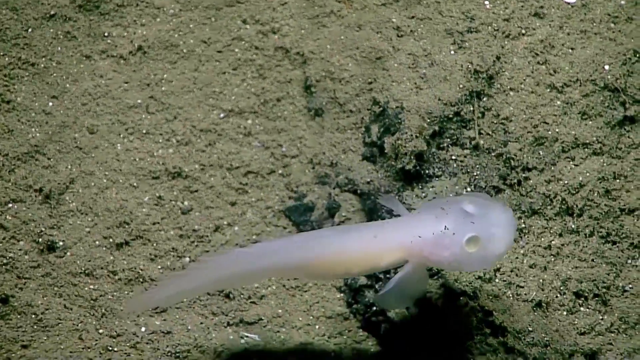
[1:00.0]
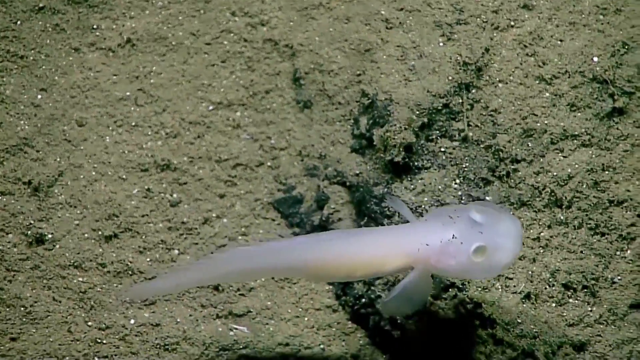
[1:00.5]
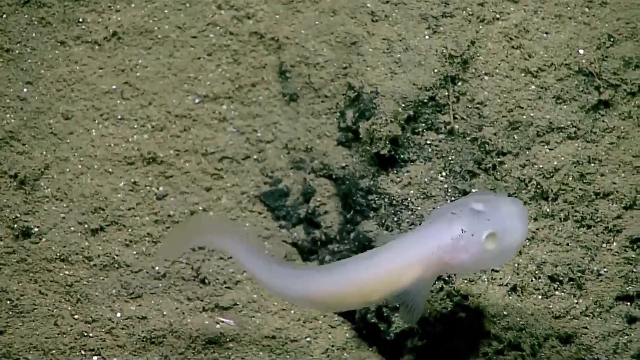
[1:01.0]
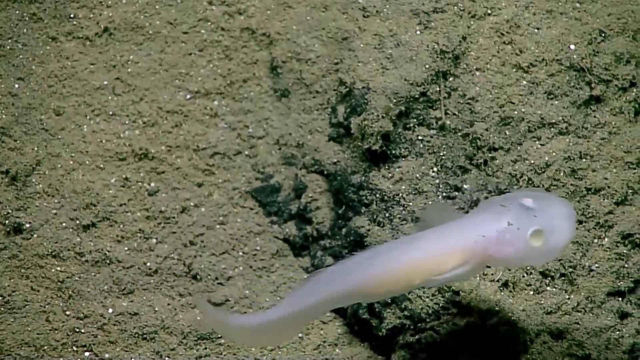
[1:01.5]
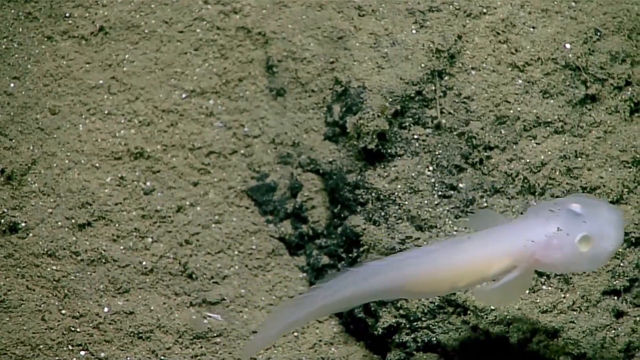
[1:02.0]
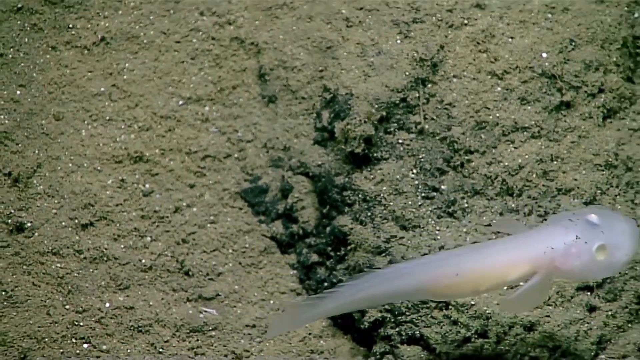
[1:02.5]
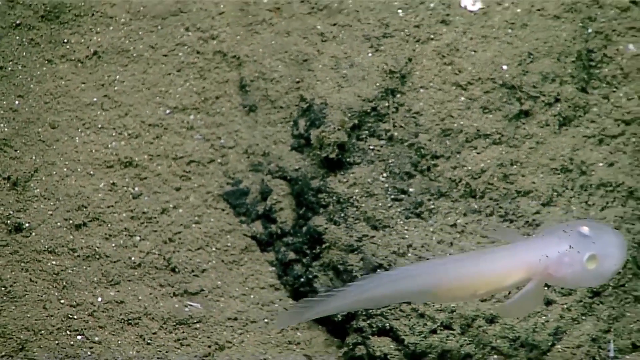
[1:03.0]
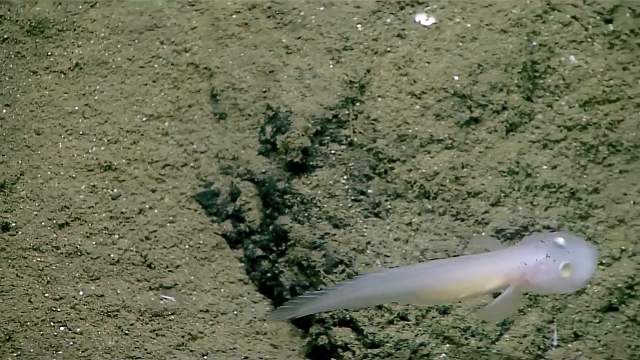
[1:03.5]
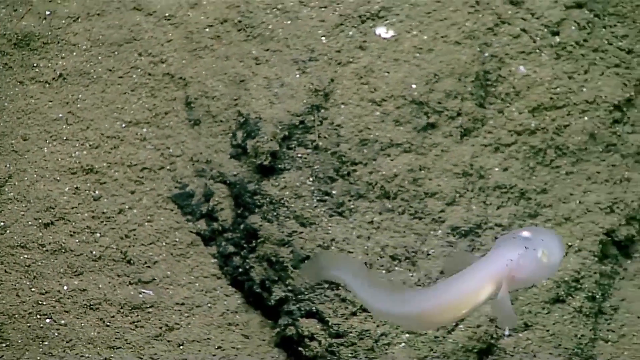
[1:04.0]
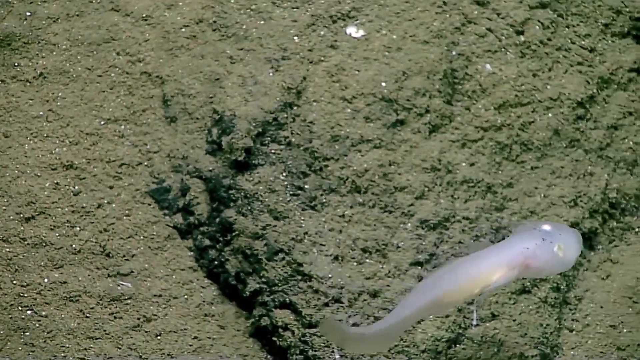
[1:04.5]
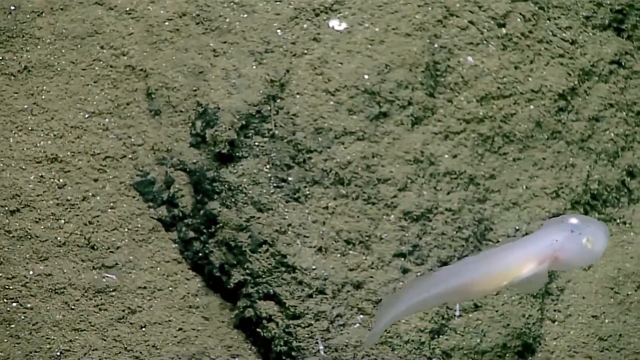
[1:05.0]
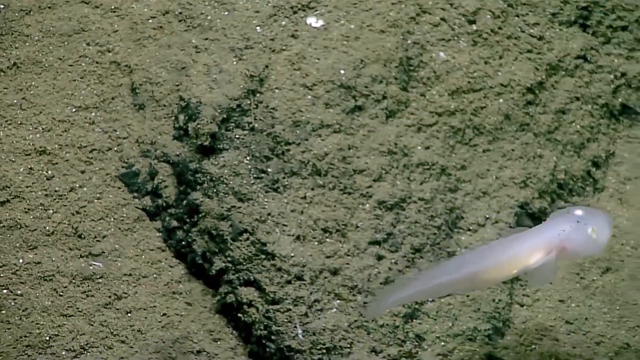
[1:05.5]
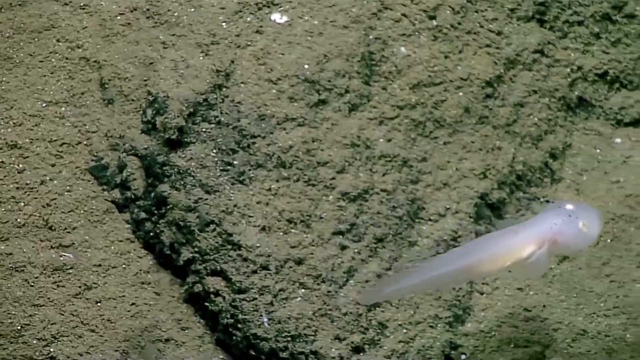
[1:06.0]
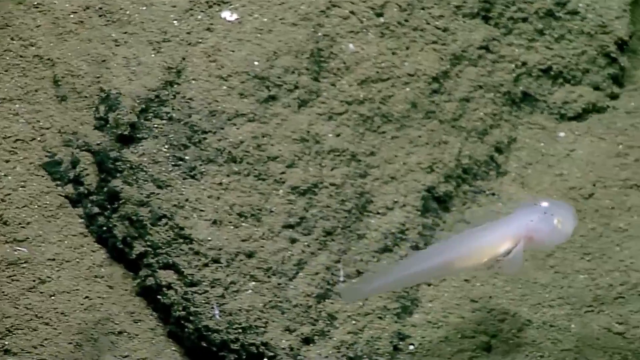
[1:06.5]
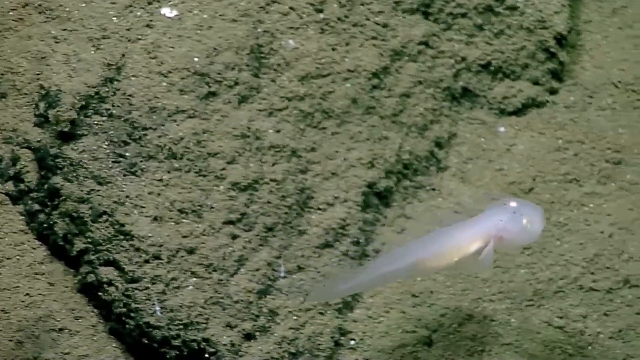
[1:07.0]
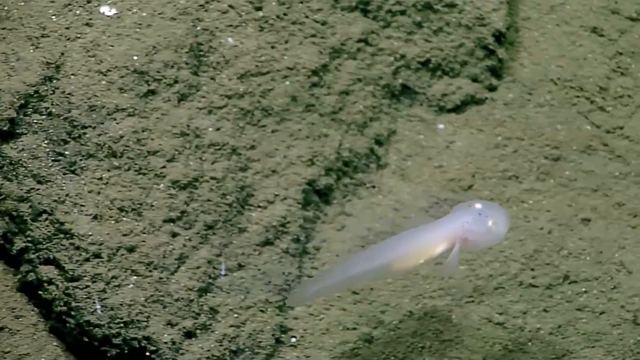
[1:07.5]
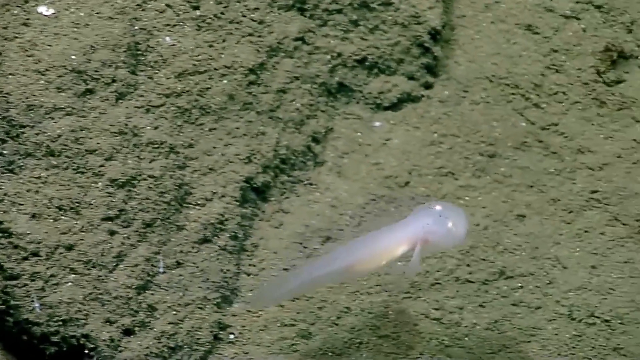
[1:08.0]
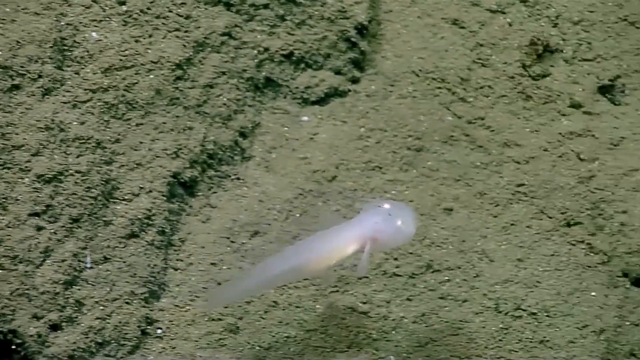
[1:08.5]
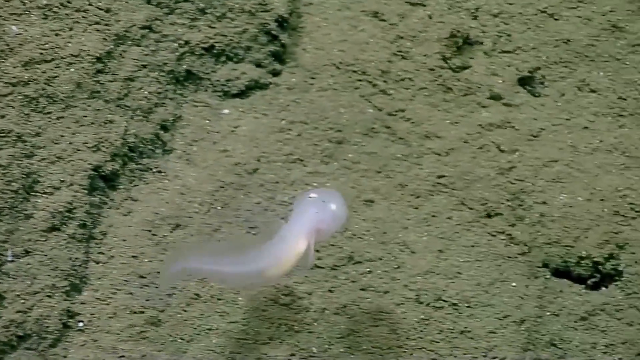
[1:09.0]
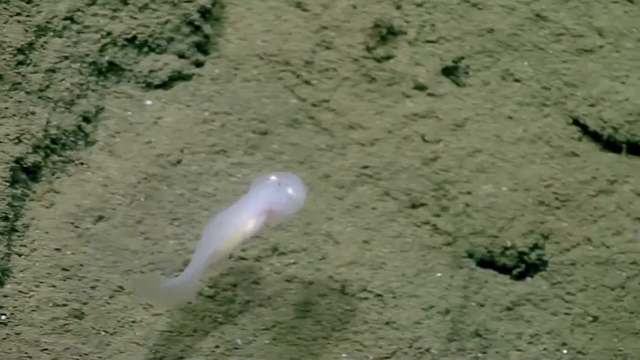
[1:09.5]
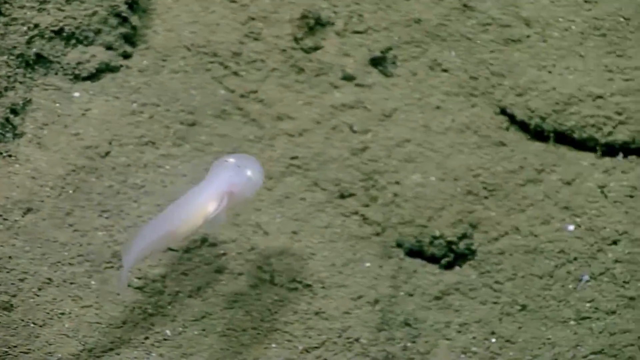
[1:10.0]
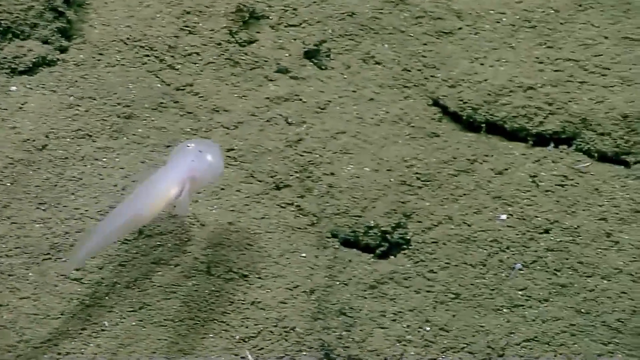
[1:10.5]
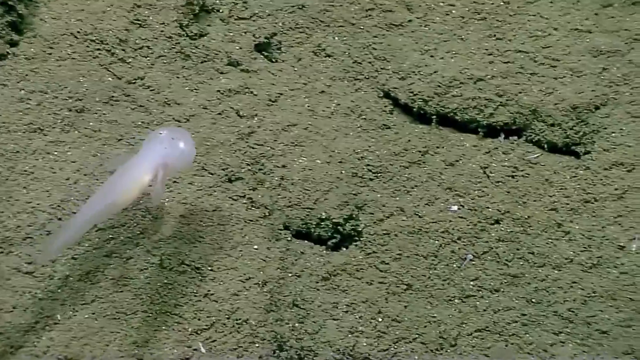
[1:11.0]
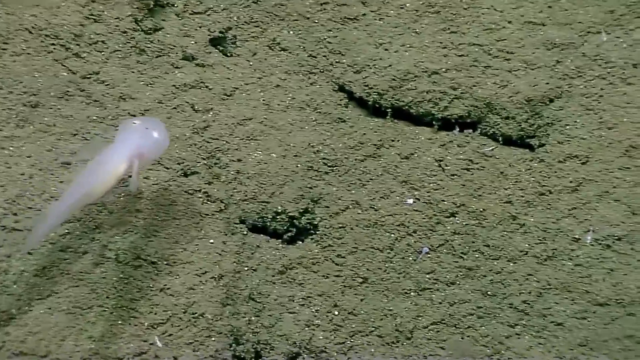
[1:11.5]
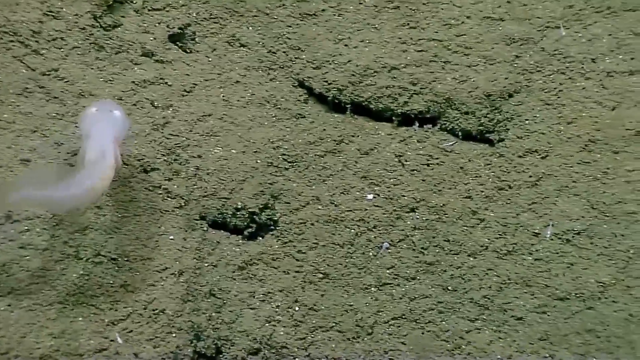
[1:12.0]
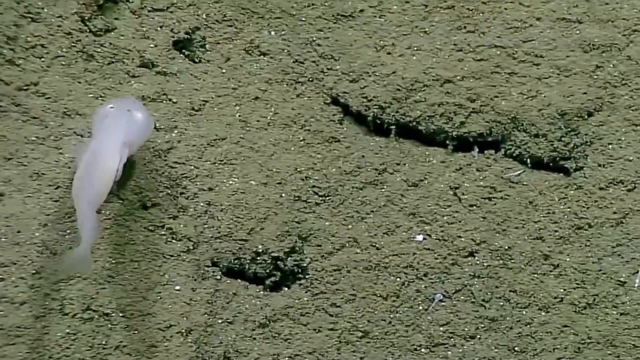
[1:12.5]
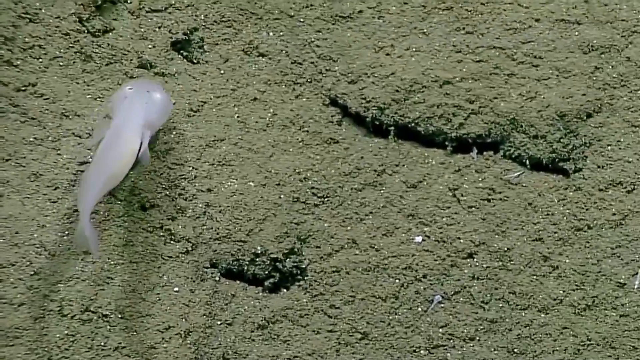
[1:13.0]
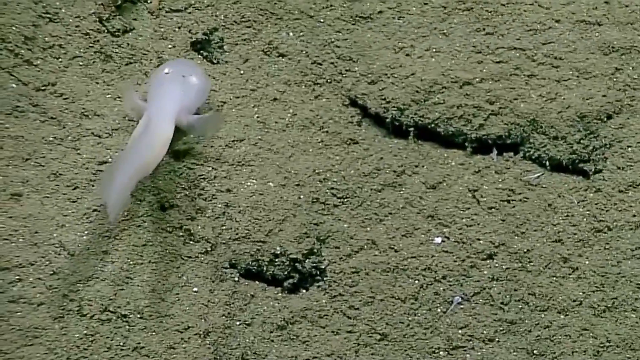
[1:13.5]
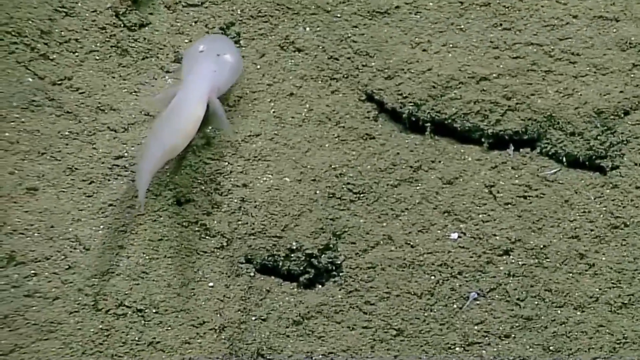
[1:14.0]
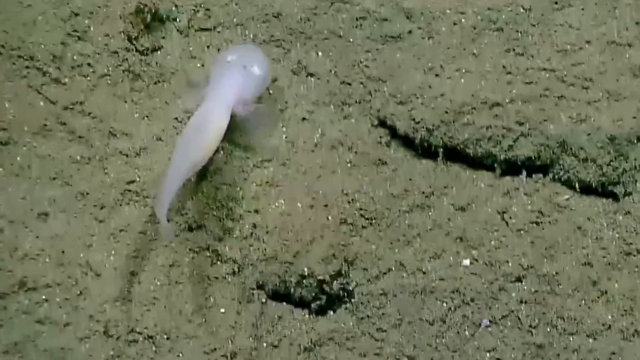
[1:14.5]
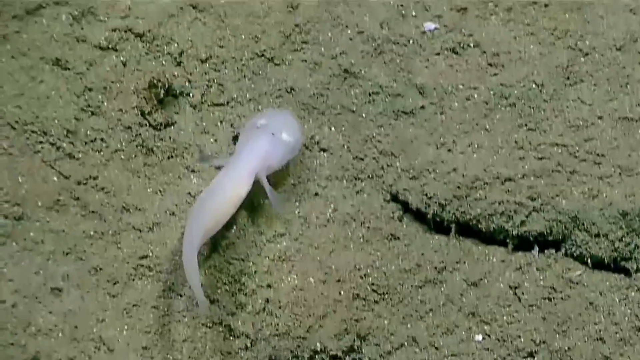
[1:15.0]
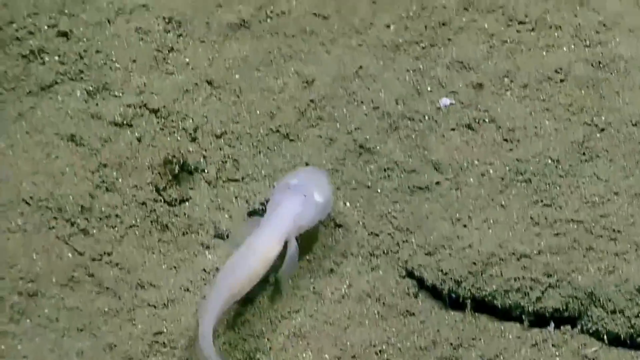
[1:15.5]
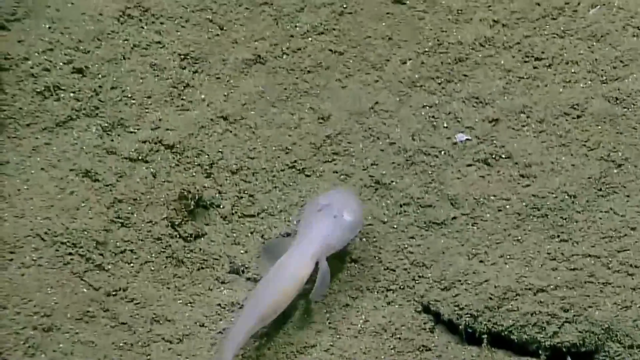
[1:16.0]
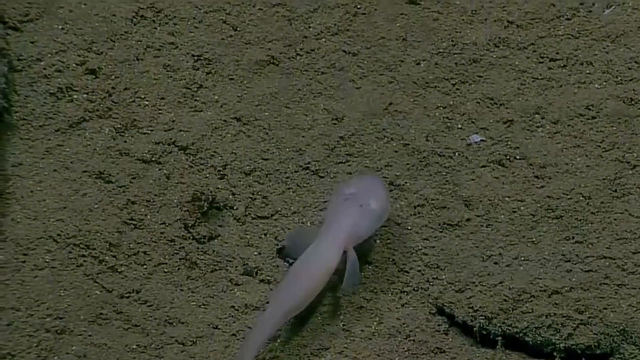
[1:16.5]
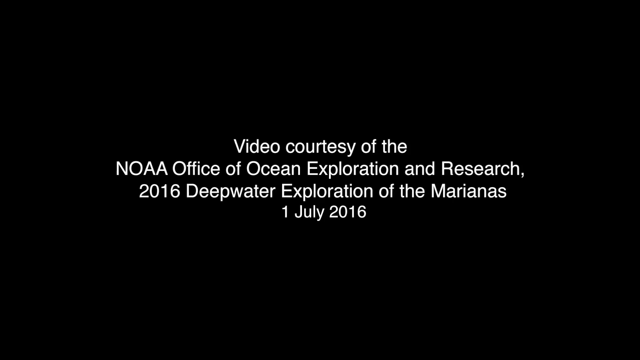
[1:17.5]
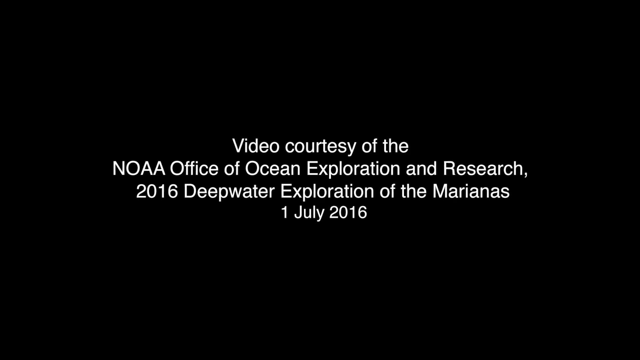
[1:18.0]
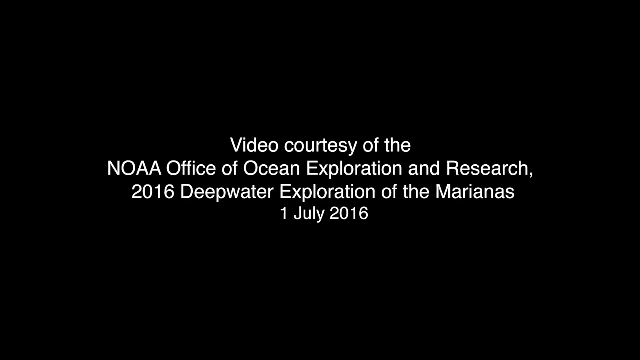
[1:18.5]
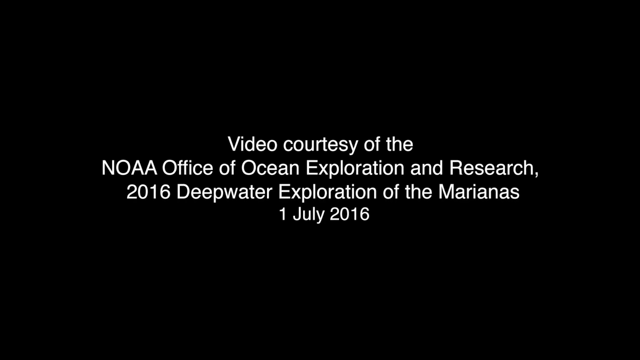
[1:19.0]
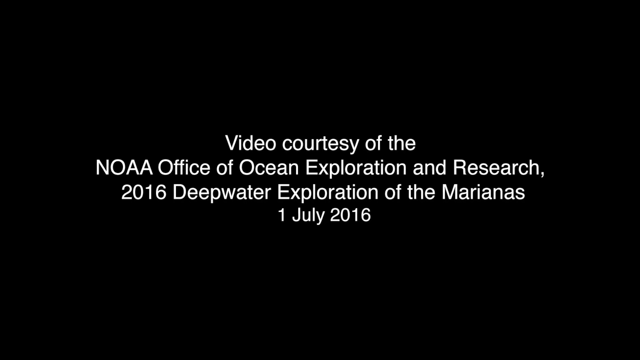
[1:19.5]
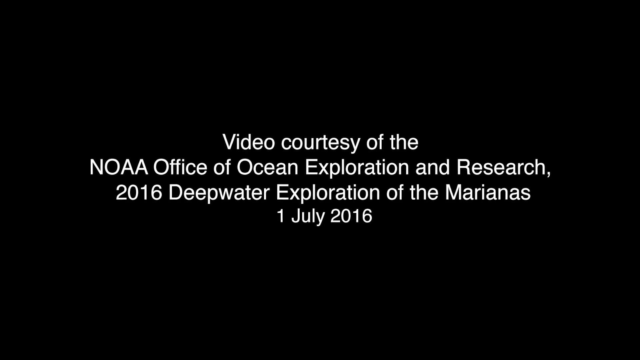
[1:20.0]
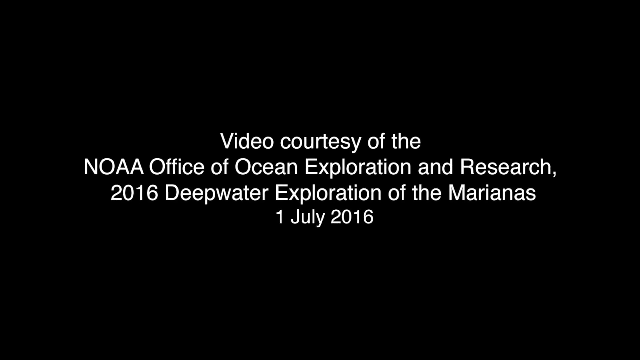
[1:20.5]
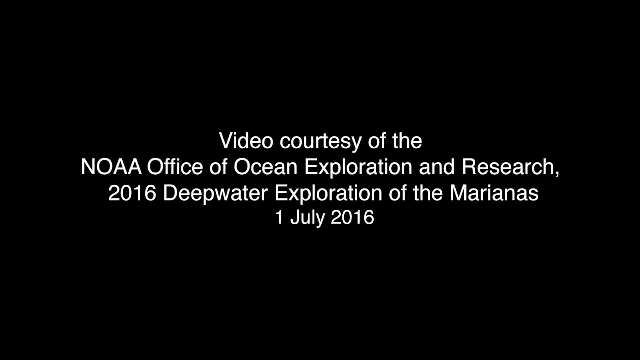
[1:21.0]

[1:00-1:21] The Aphyonidae SP slowly and gracefully swims across the cracks and crevices in the floor of the Mariana Trench, deep in the ocean. The brown sediment on the bottom contains white or gold pieces that reflect the light source. The creature's gold reflective eyes show no visible iris or pupils, and there is a gold reflective area in its stomach area. A slight pink hue shows in the bottom neck area of the translucent creature. It starts to float on the currents, moving both translucent fins as it travels across the deep, dark parts of the trench. The screen then shifts to black with white text stating that the video is courtesy of the NOAA Office of Ocean Exploration and Research, 2016 Deepwater Exploration of the Marianas, July 1, 2016.